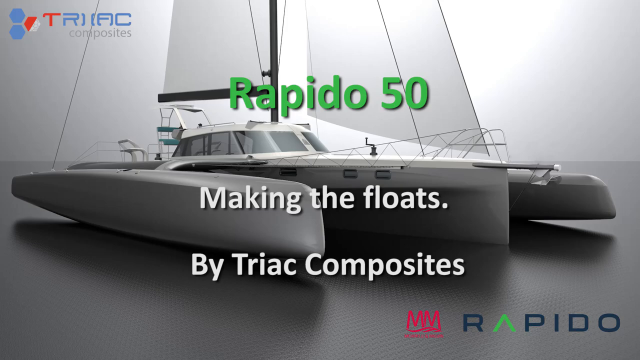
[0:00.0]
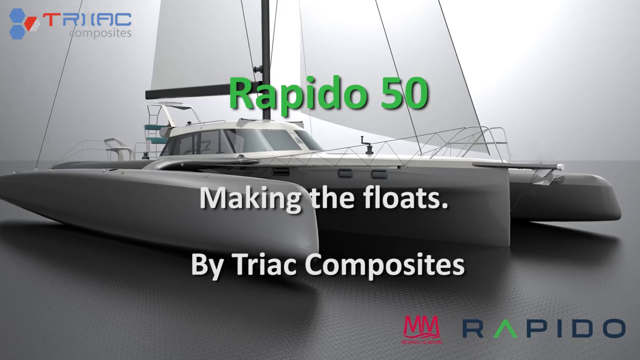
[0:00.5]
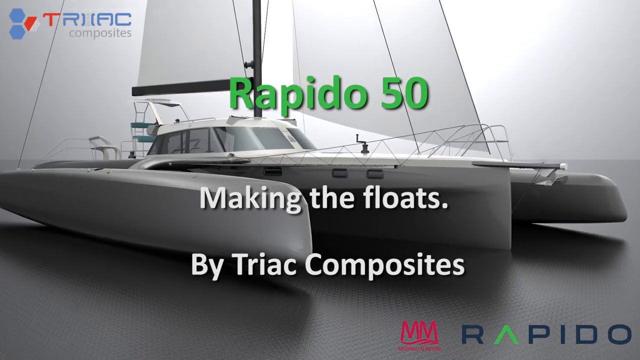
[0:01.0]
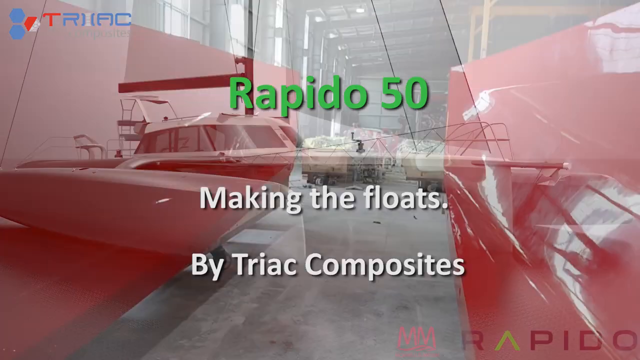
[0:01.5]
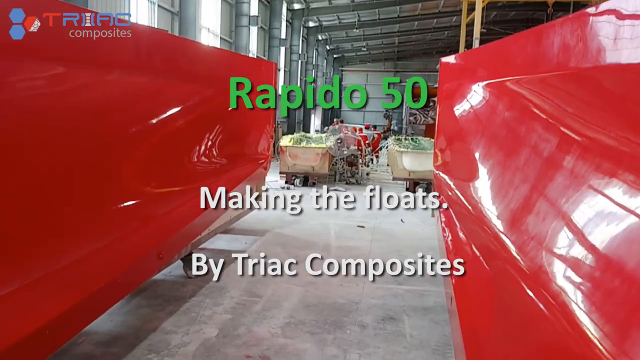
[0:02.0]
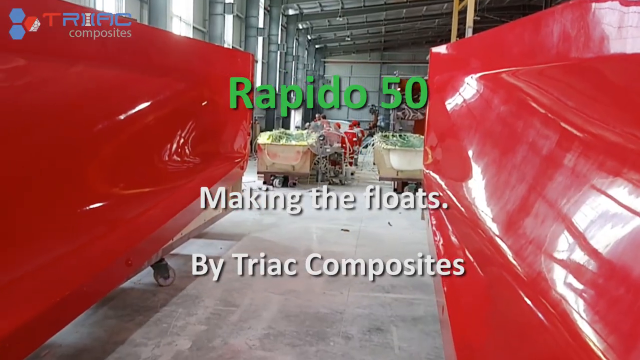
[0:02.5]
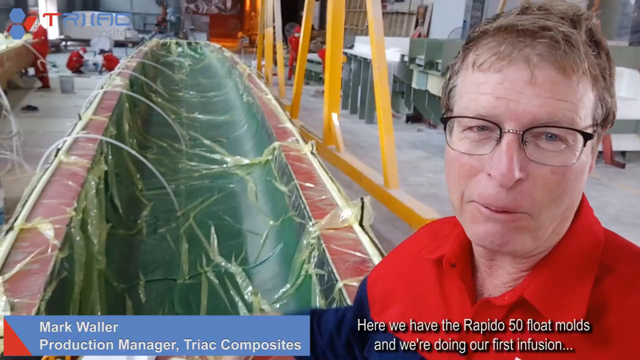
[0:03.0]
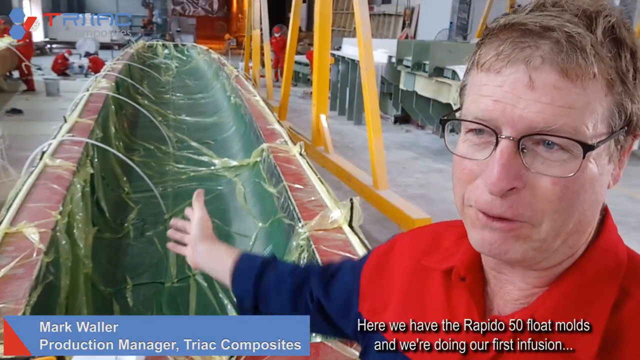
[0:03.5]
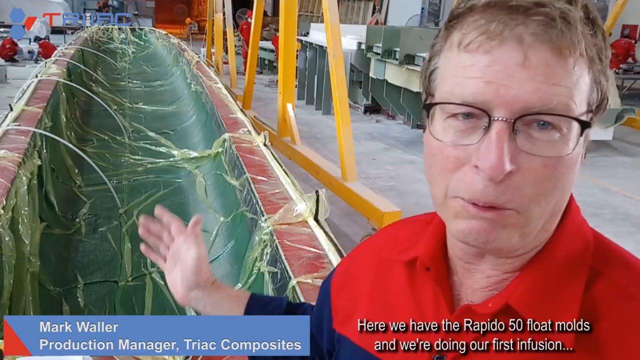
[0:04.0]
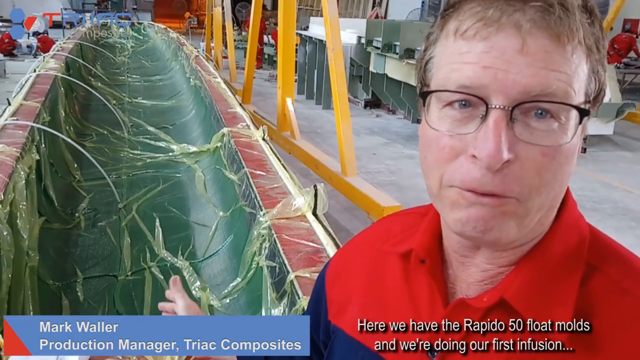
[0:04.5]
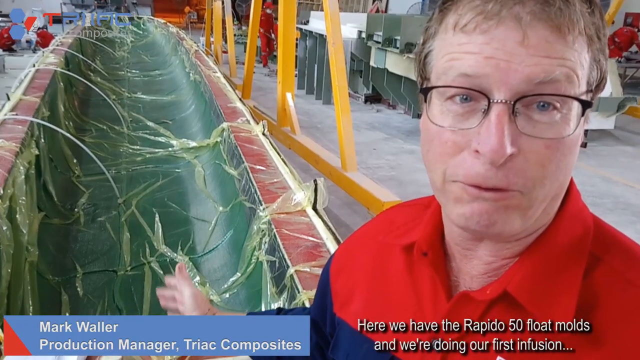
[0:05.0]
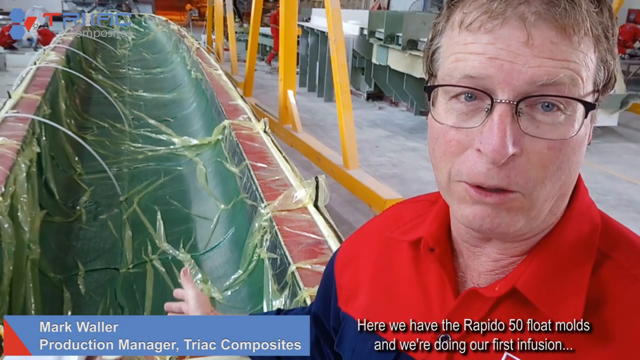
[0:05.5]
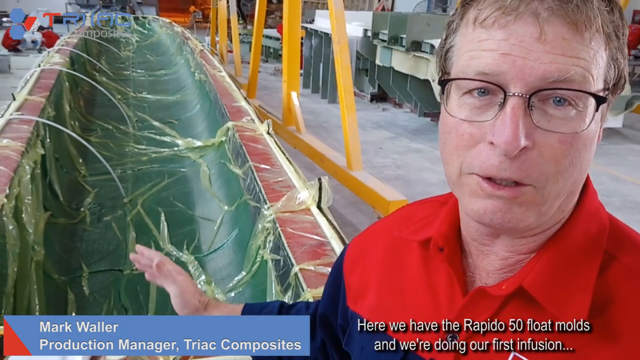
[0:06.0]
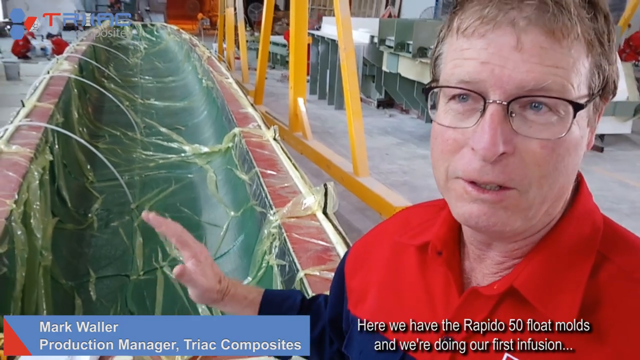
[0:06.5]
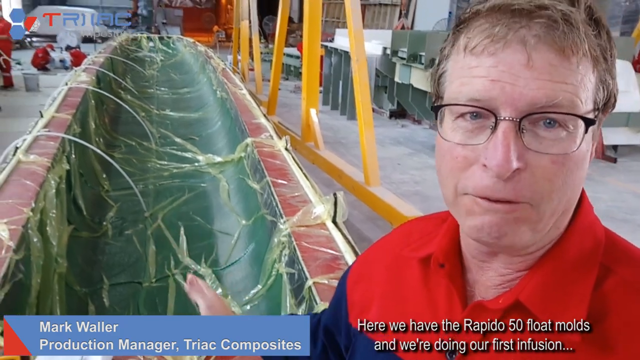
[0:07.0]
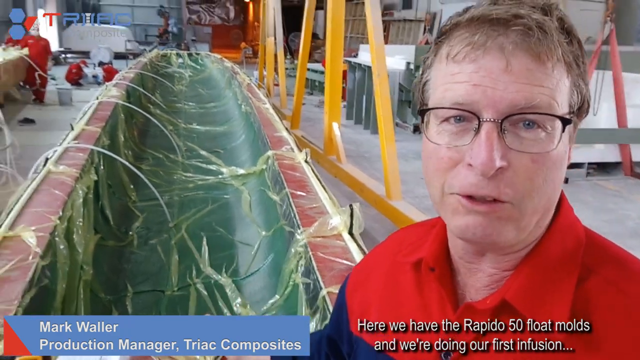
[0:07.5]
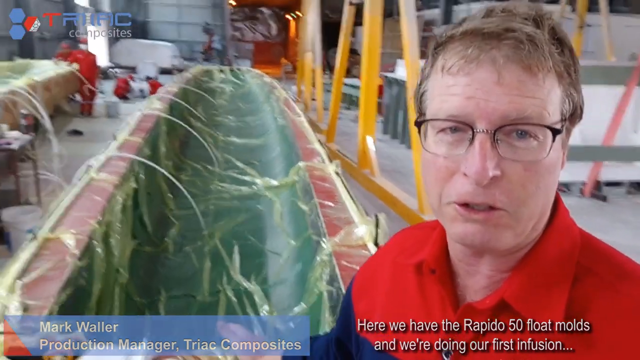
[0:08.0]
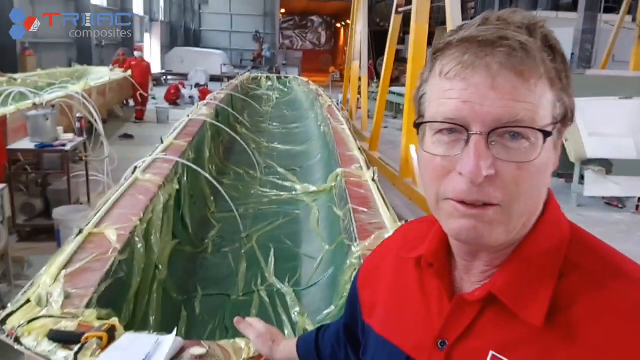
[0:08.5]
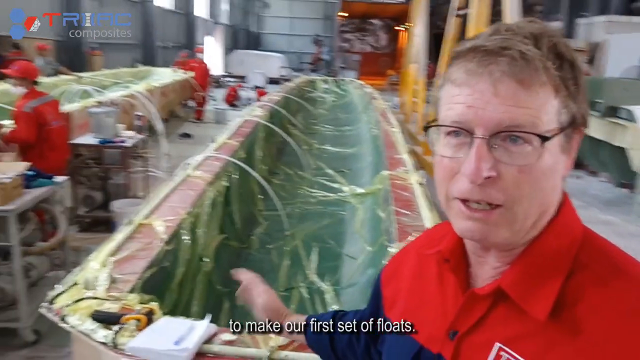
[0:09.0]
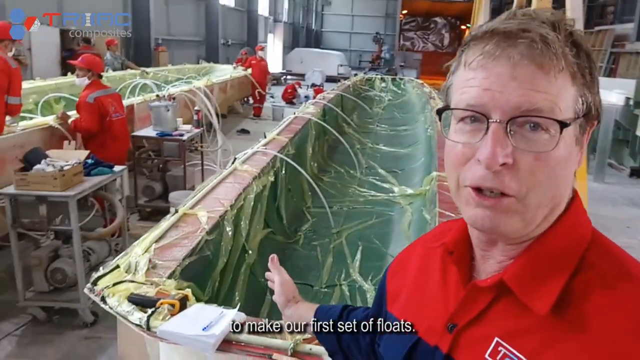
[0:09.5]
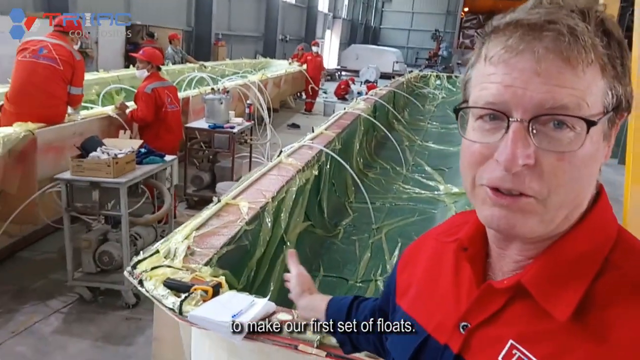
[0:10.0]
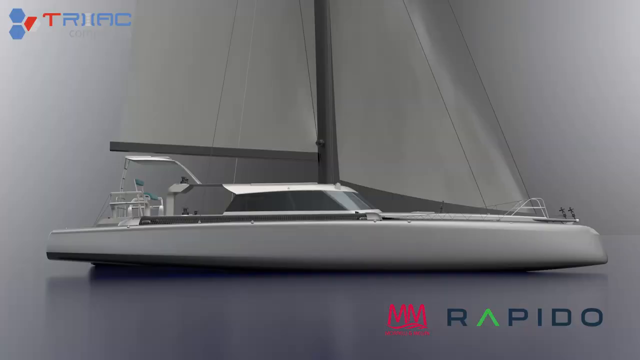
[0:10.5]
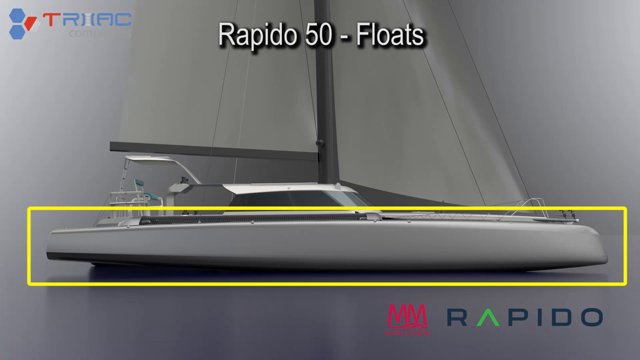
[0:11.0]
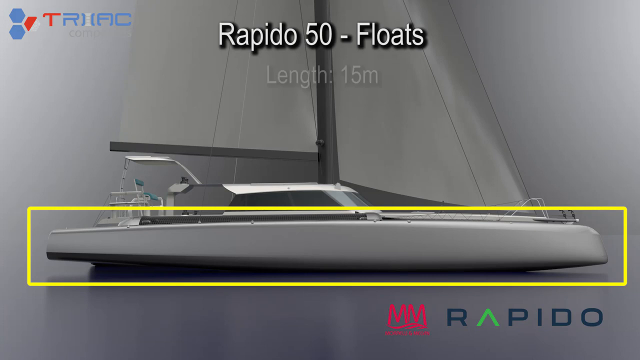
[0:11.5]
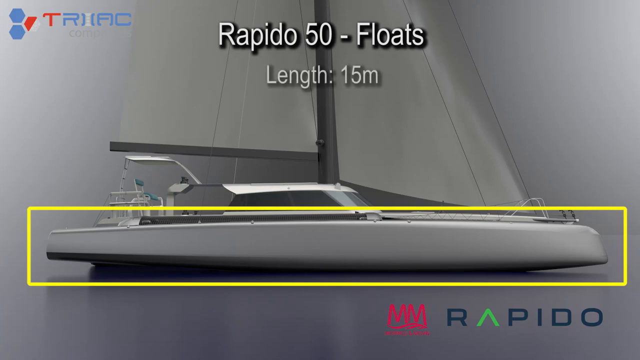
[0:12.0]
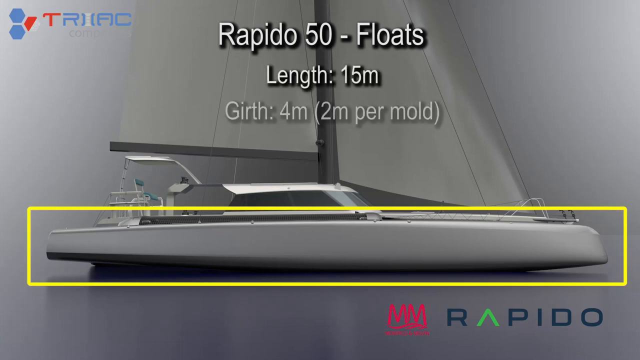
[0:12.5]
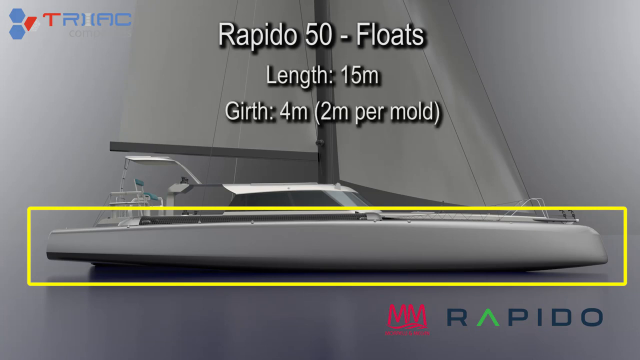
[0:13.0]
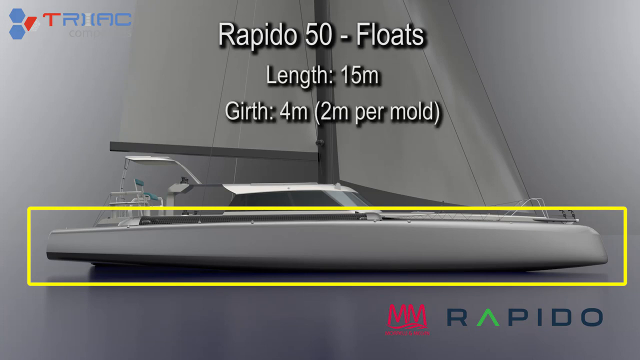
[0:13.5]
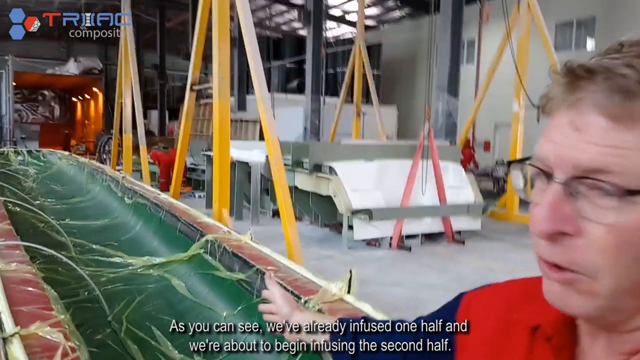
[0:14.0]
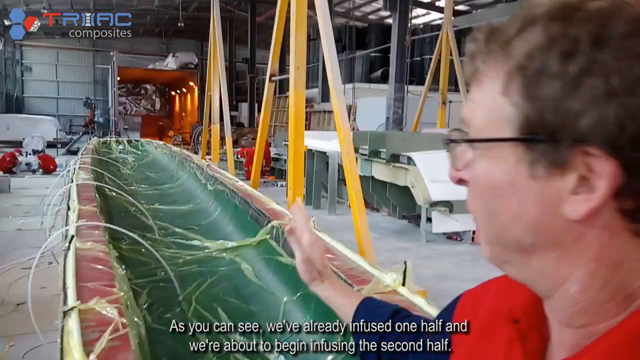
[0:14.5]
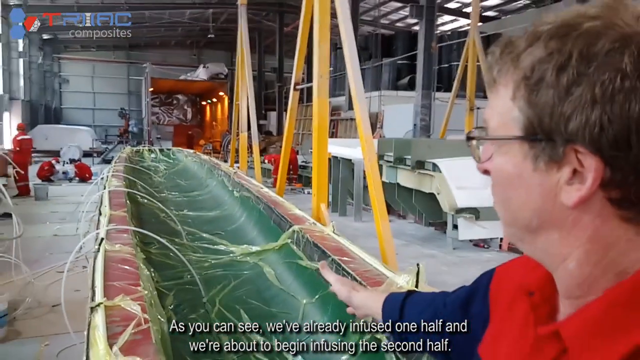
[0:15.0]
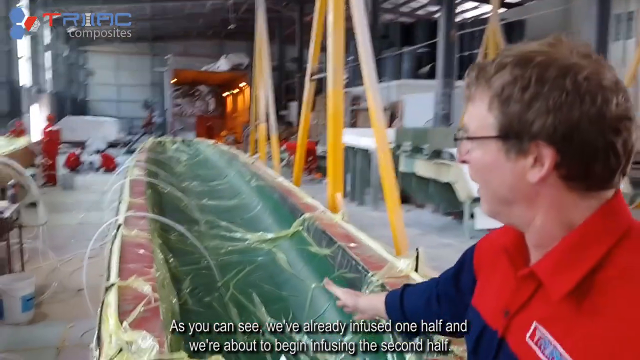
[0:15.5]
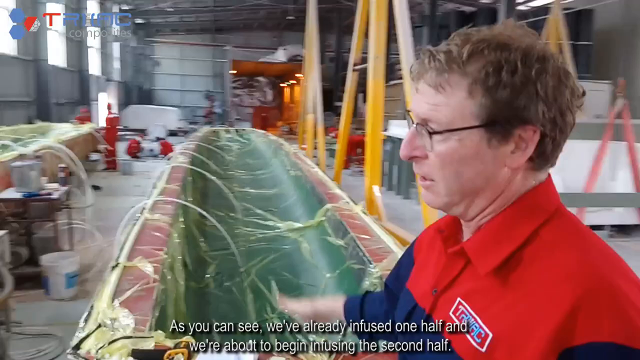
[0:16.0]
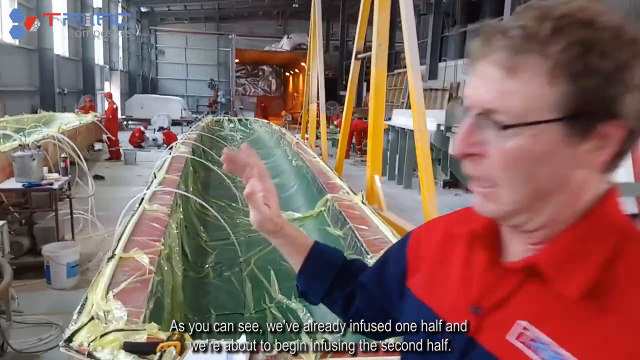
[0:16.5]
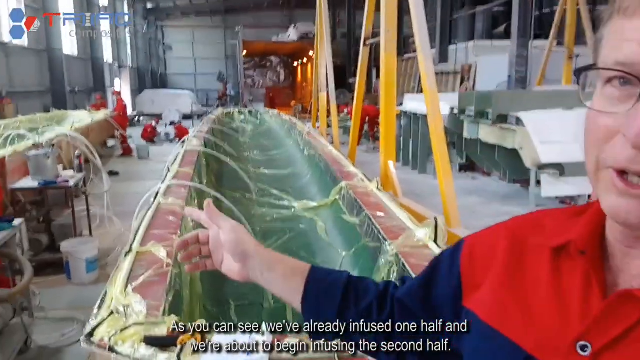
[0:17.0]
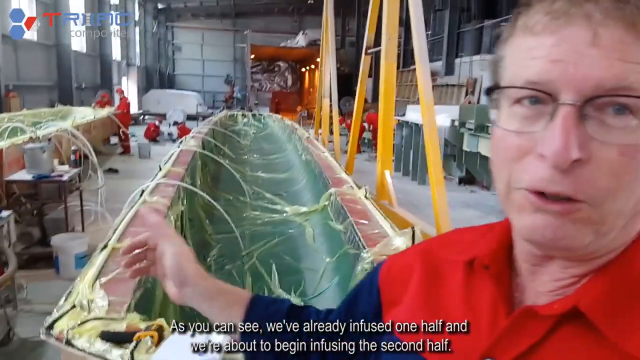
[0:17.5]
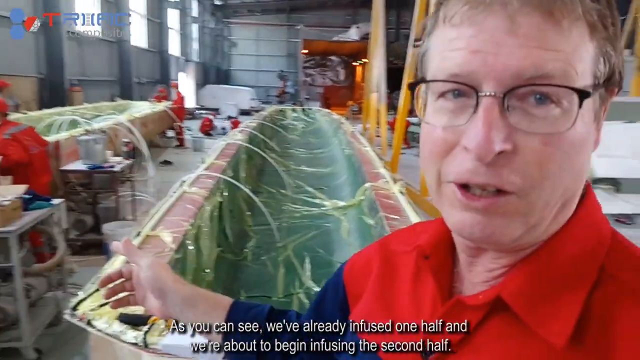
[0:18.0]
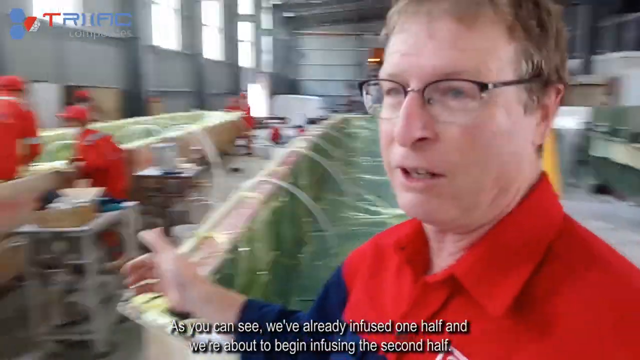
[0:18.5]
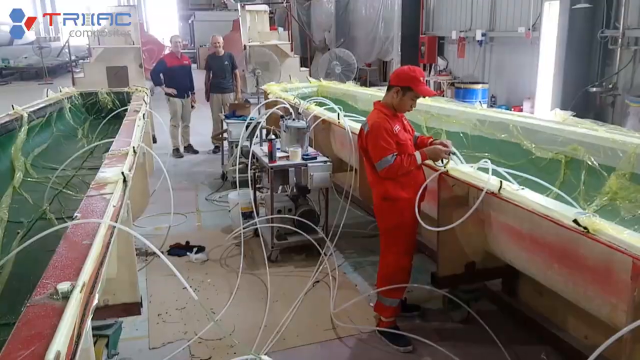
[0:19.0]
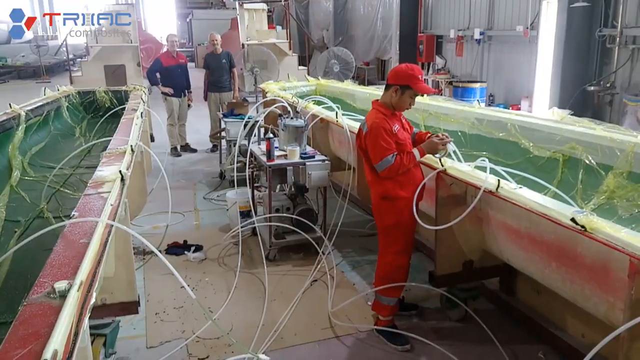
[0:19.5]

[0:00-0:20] The video opens on a gray portrait of the Rapido 50, with the letters "Rapido 50" written in green font and, underneath, "Making the Floats by Triaf Composites." The scene moves to what looks like a boat factory, where a man named Mark Waller is shown. It then transitions to a gray picture of the float showing its dimensions, such as the length and the girth, before returning to Mark Waller inside the factory. The interior of the factory where the floats are made is shown.